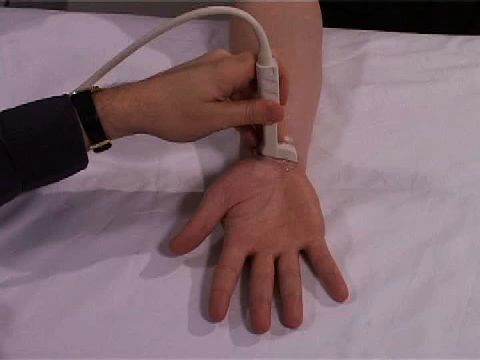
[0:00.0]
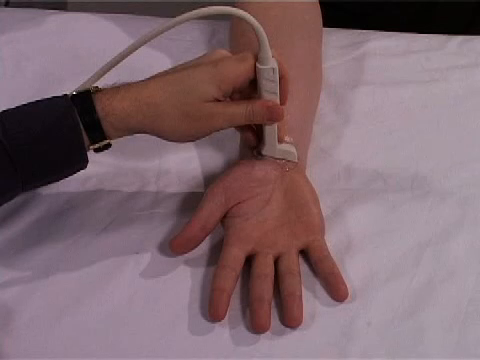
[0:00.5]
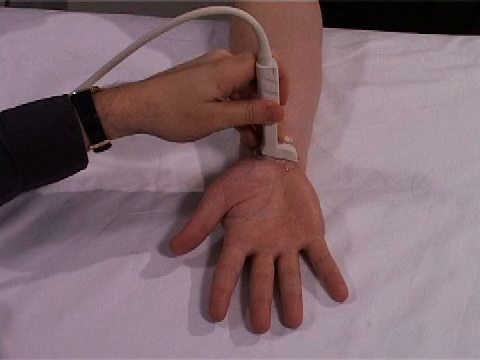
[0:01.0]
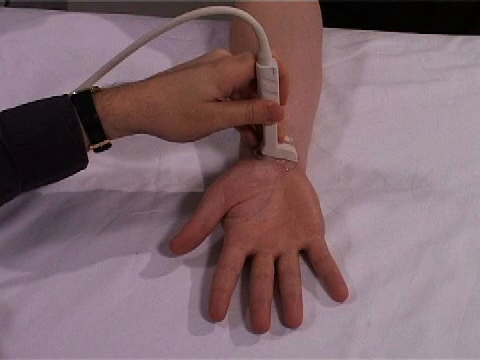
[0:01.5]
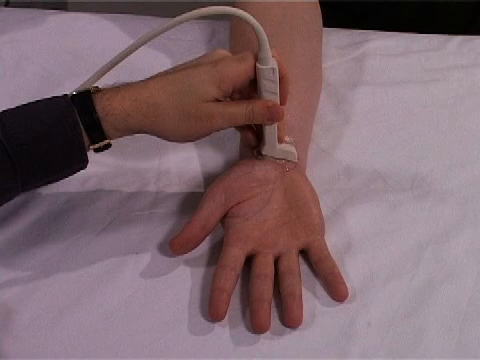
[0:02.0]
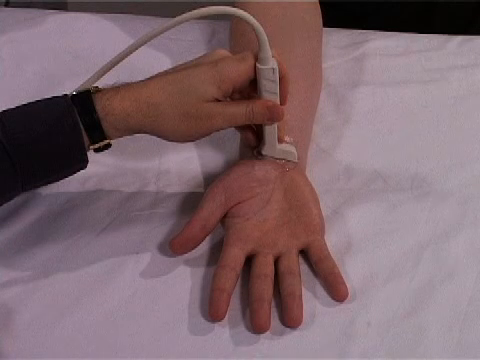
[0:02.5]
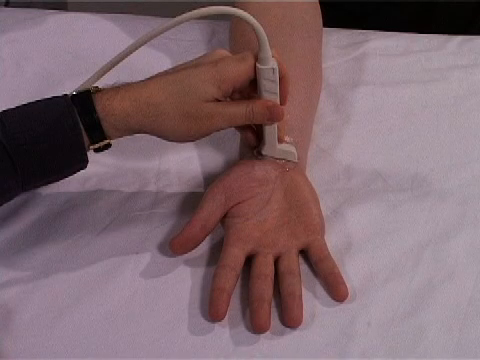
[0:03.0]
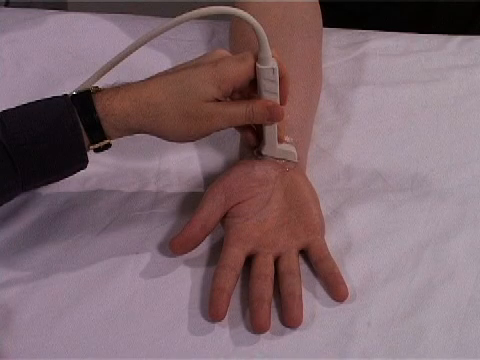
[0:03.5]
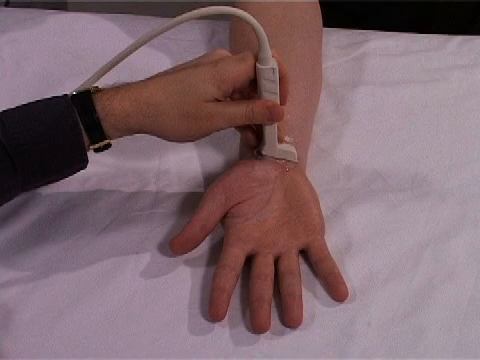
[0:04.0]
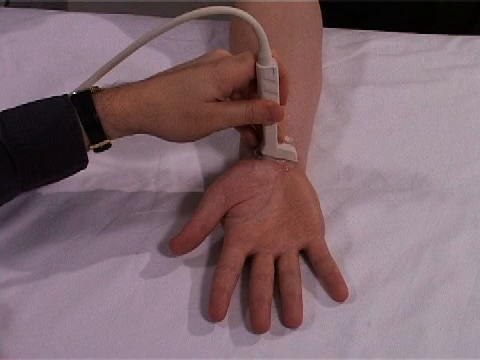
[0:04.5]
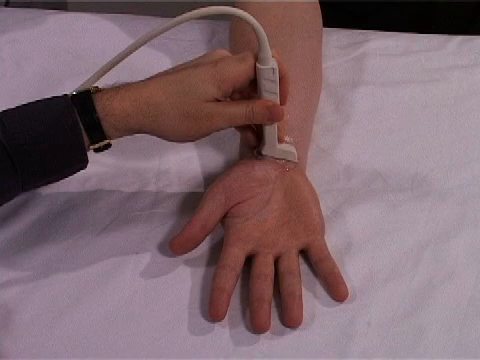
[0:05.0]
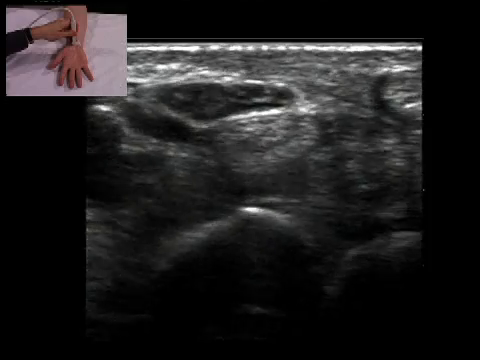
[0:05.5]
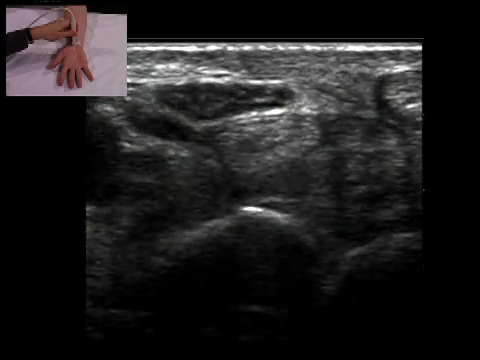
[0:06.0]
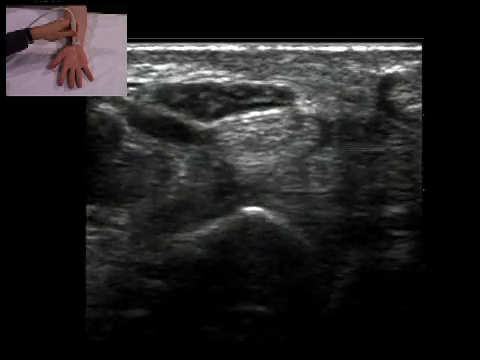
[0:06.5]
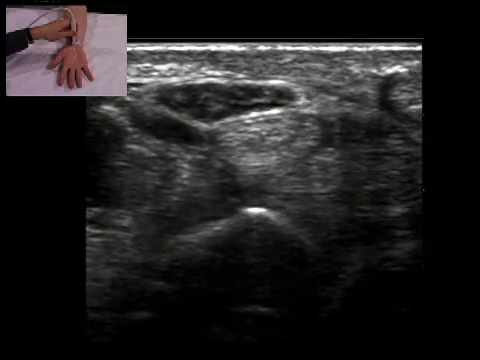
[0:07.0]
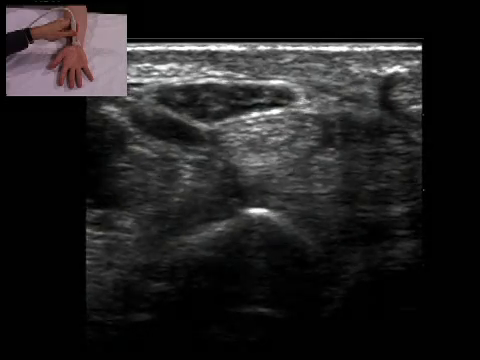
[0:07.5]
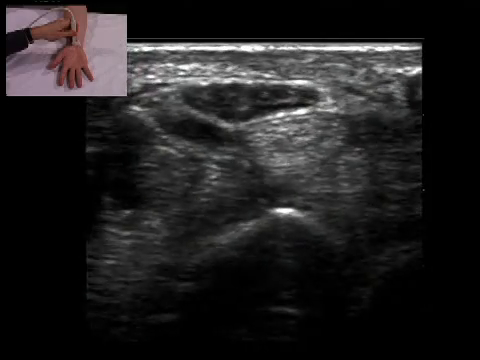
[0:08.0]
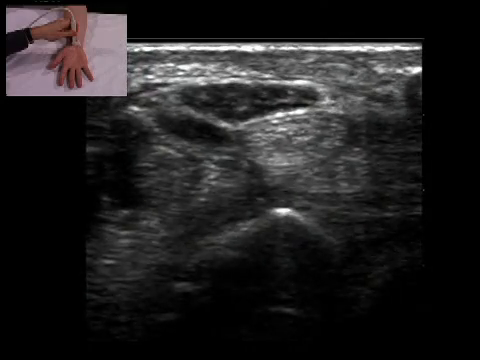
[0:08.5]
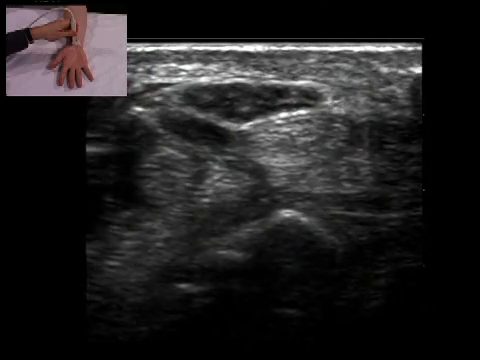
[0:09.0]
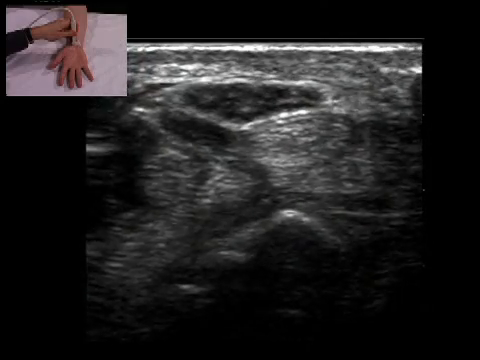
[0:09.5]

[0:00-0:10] A person's right hand is shown with the palm facing up and the thumb on the left side. A different person has a white tool sort of pressed against the wrist area, their hand gripping what seems to be the handle part. The area looks sort of wet, possibly indicating some kind of insertion, perhaps from a minor surgery on the wrist. This person wears a watch with the watch face on the back of their wrist and a long-sleeved black jacket. The view then switches to a black-and-white image of the inside of the wrist, apparently from some sort of imaging system, maybe a CT or another kind of scanner.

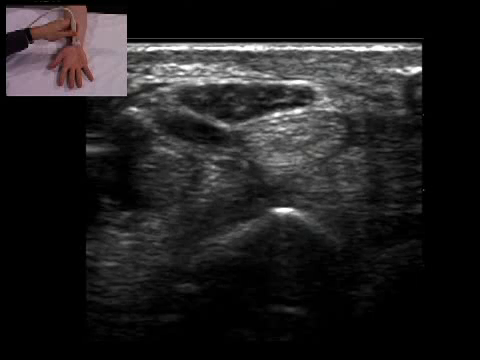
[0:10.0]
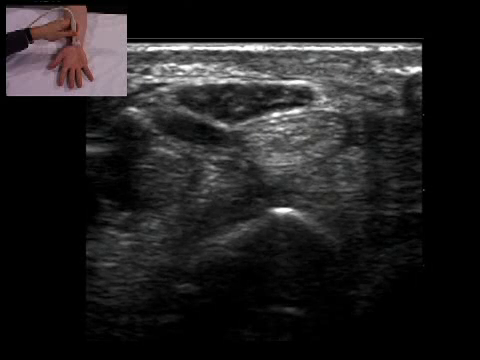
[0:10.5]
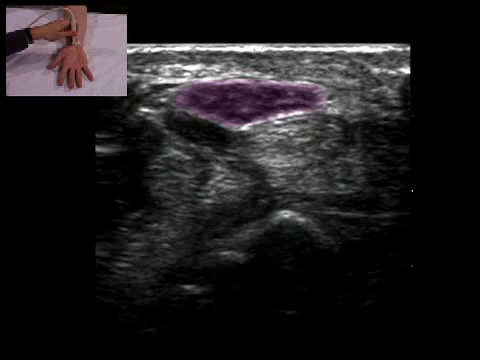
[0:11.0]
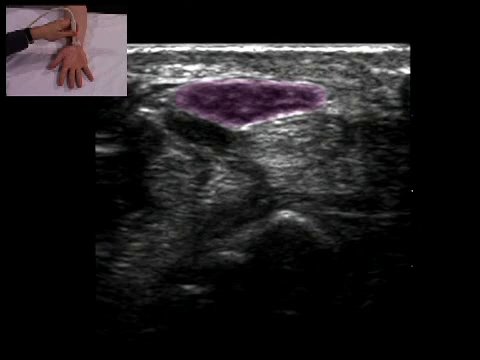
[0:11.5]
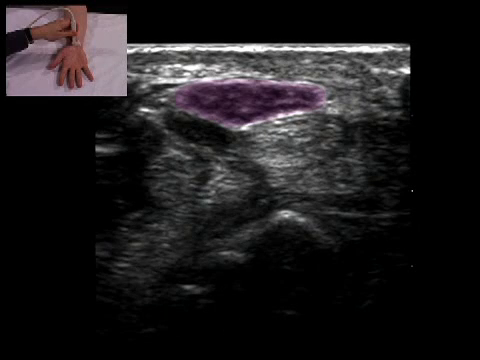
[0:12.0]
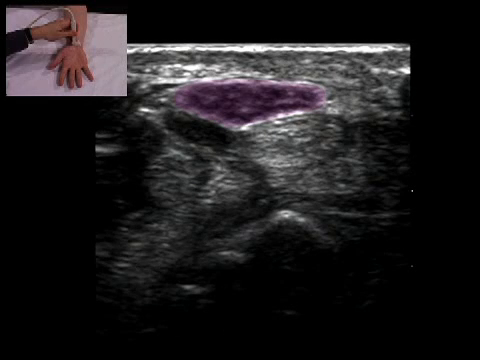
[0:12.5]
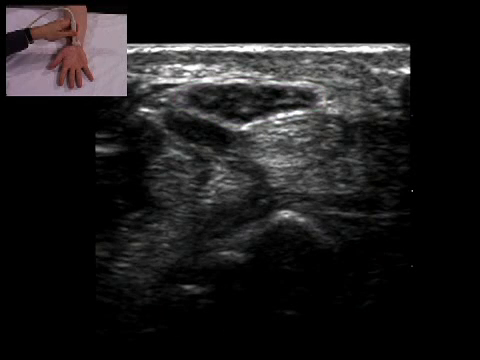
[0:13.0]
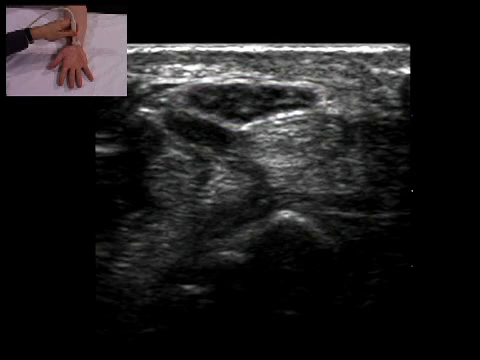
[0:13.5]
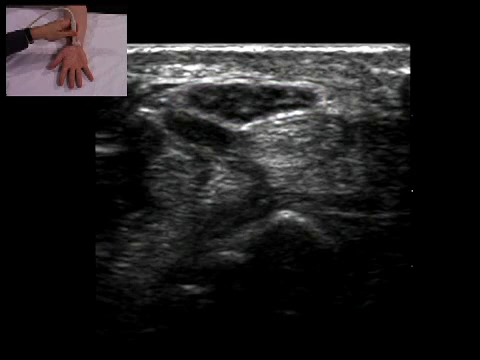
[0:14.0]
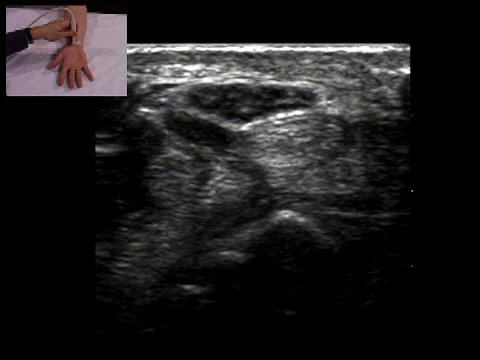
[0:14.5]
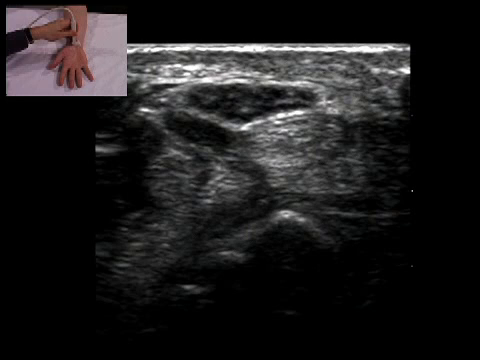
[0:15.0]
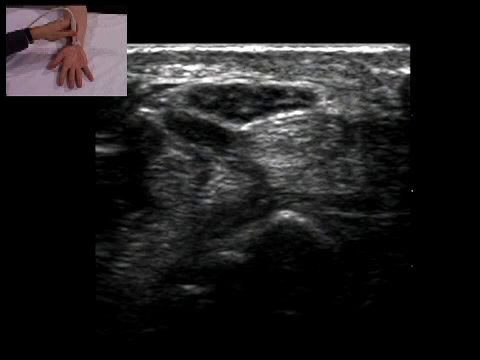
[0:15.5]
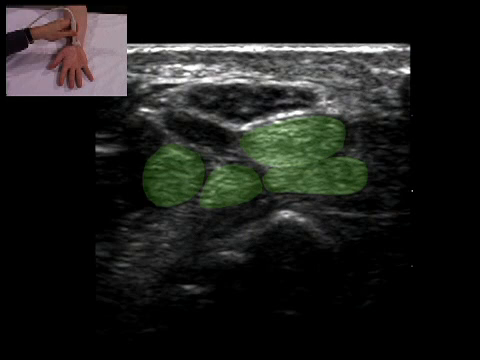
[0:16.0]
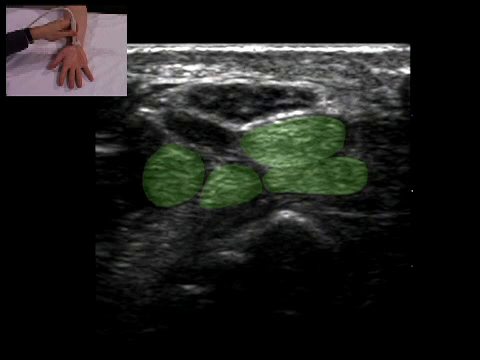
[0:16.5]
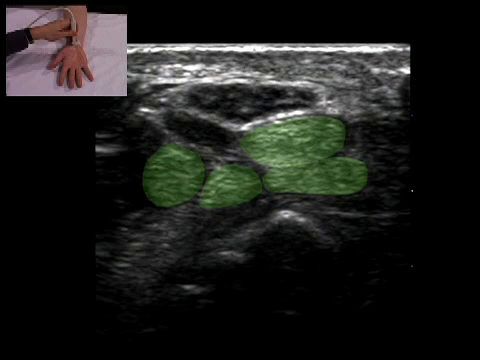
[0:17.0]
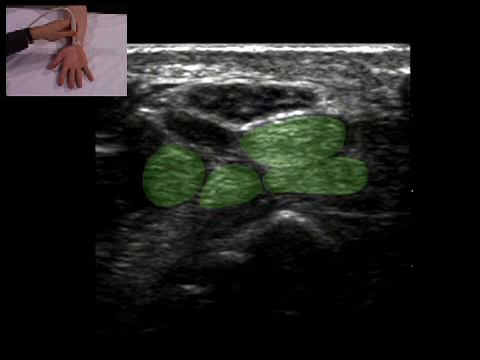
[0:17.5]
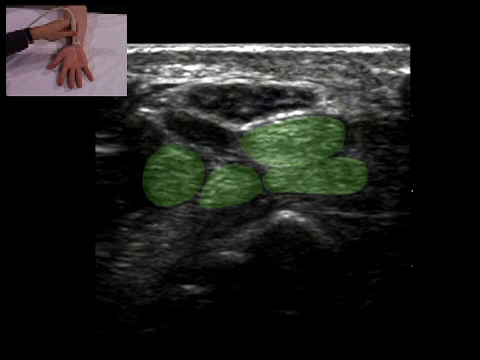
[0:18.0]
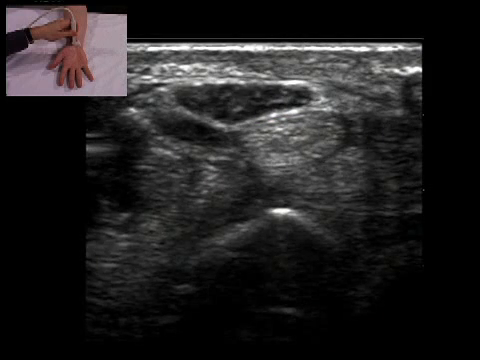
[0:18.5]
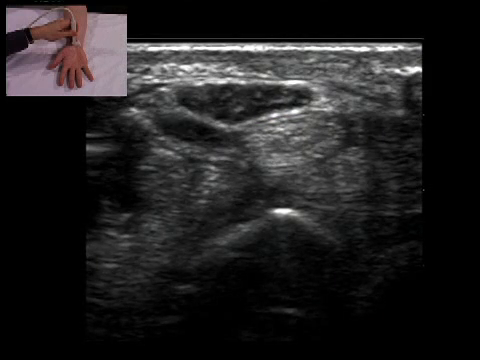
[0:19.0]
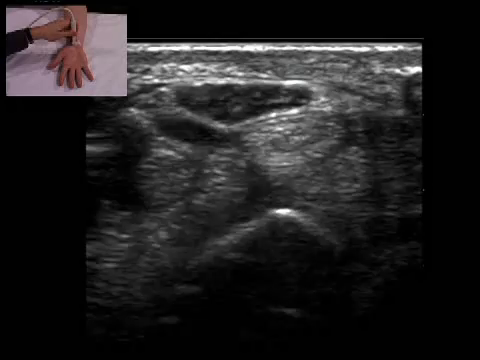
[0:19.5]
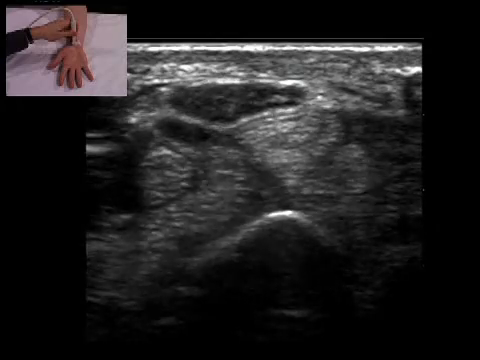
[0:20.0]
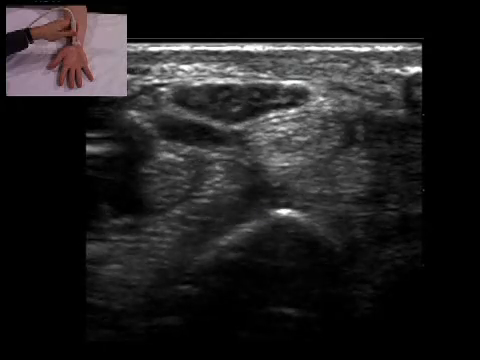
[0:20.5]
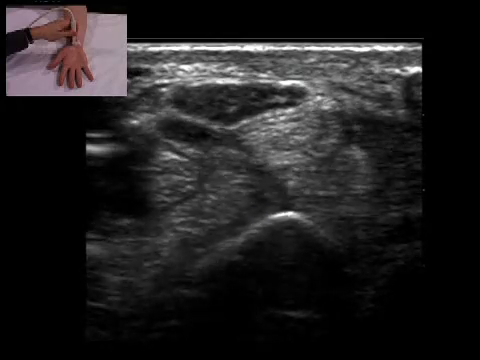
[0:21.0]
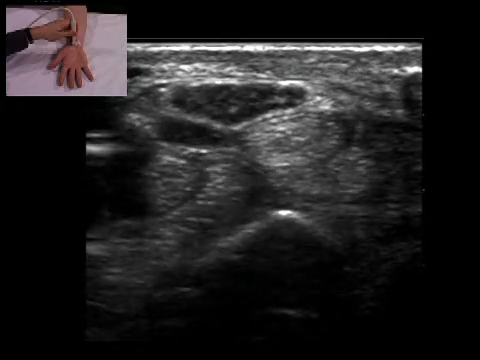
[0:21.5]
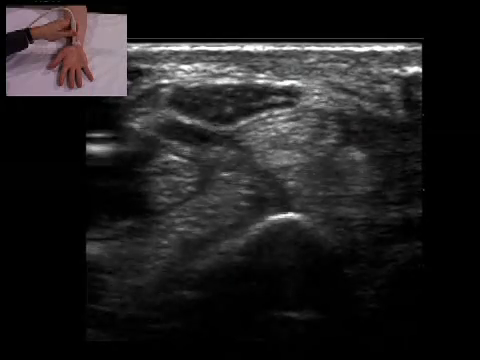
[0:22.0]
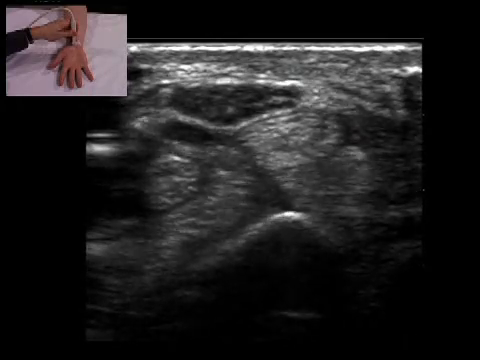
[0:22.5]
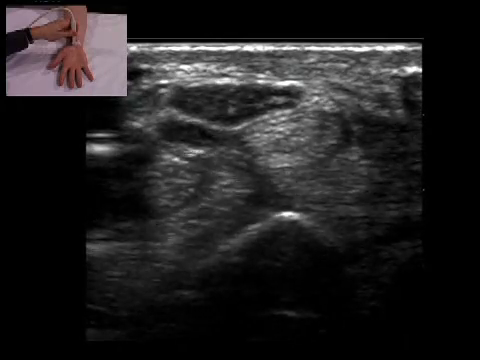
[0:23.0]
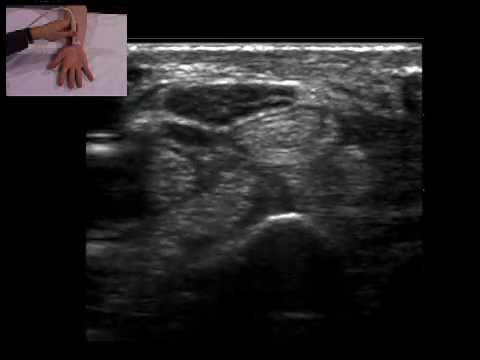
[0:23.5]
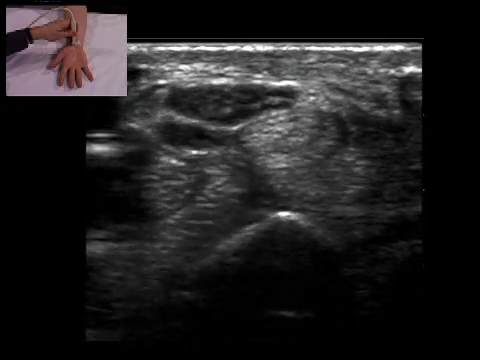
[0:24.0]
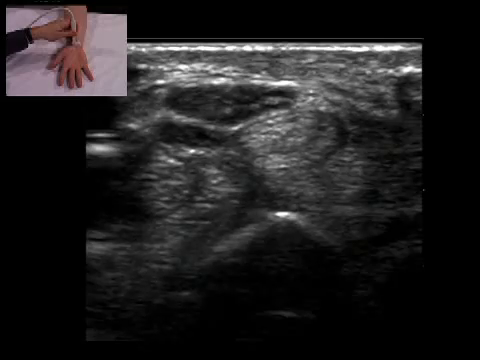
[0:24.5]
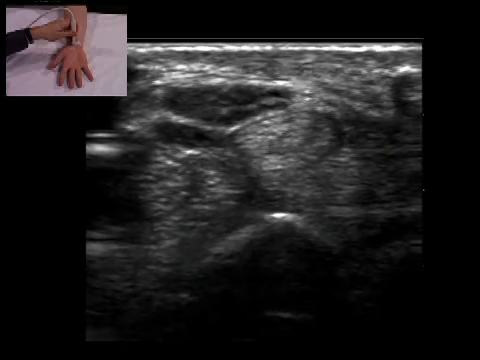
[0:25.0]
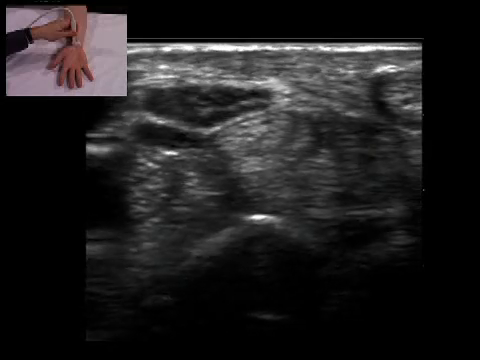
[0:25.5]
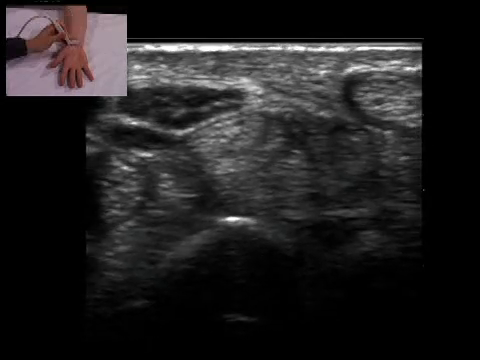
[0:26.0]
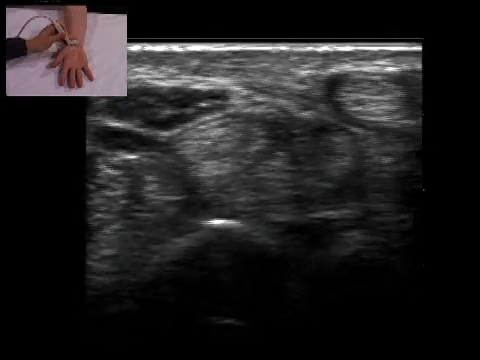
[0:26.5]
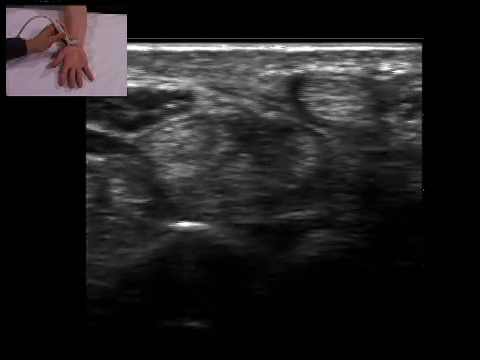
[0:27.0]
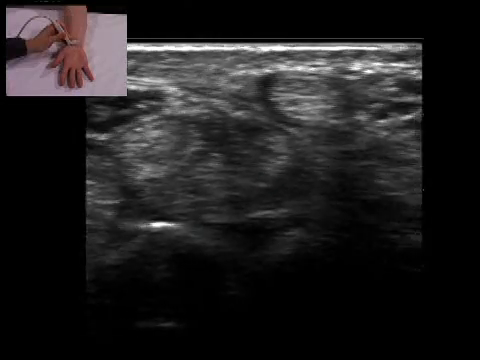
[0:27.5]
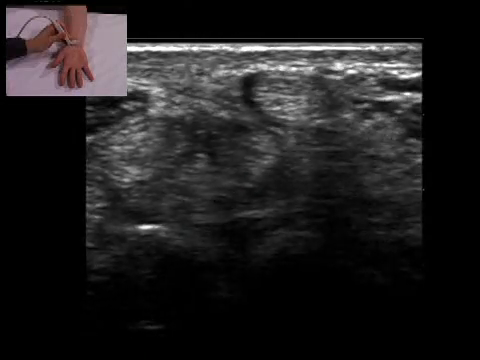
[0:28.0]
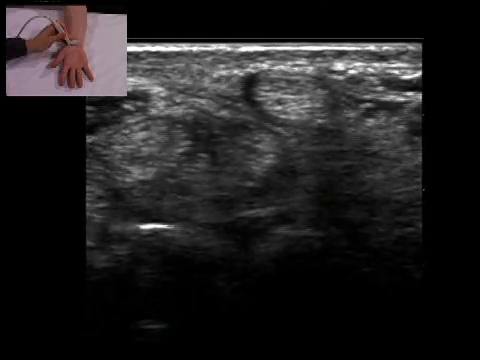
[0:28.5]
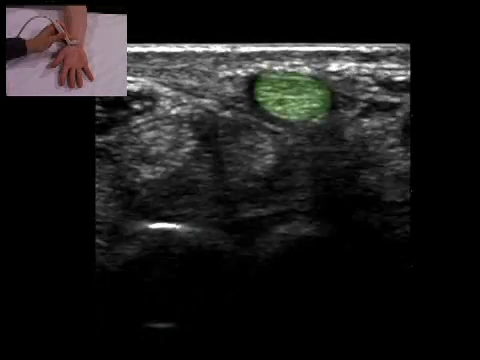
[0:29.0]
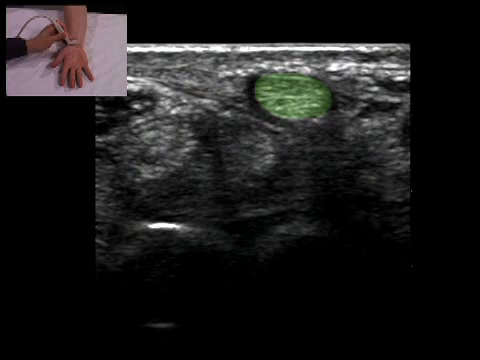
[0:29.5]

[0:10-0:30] The black-and-white image of the inside of the wrist continues. A section near the top is highlighted in purple; it shows an indentation, and its overall shape is almost like a widened Superman shield logo, not the S but the shield itself. The purple then goes away, and four areas, sort of like four balls, are highlighted in green. Two of them, larger and wider, are on the right, sort of stacked on top of each other; of the other two, one is just below the tip of the shield-shaped area and the other is to the left of that one, which is the most circular of them all. The muscle area shifts up and down as well as left to right. The view then moves to the right, and another sort of circular area is highlighted near the top; it looks like a circular area on top of a black rod or tube.